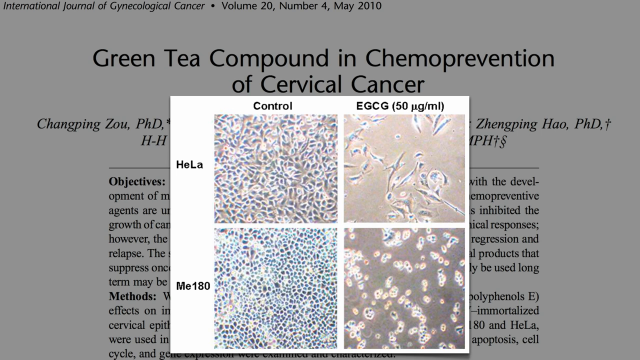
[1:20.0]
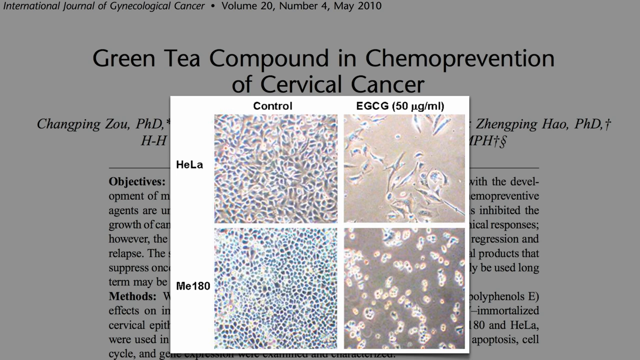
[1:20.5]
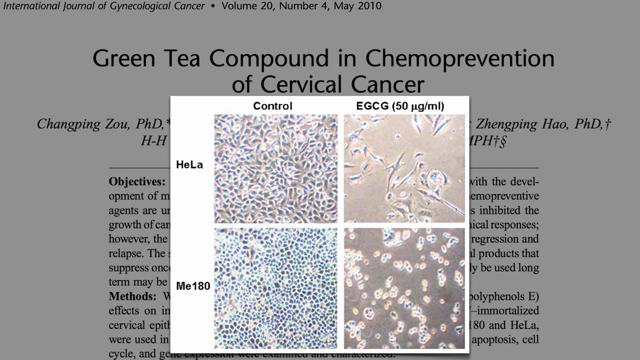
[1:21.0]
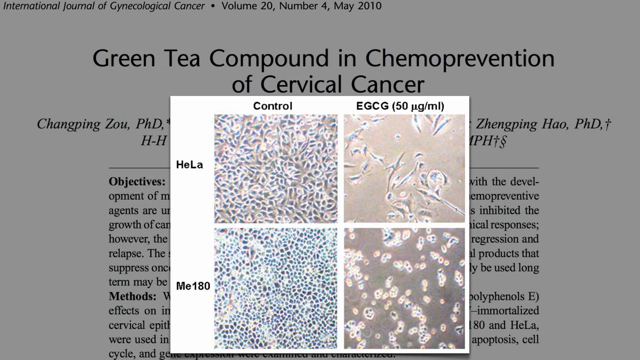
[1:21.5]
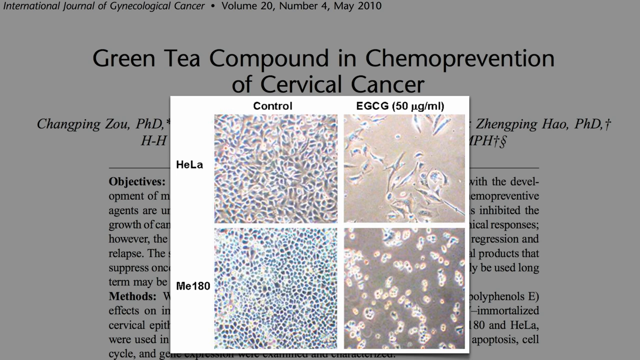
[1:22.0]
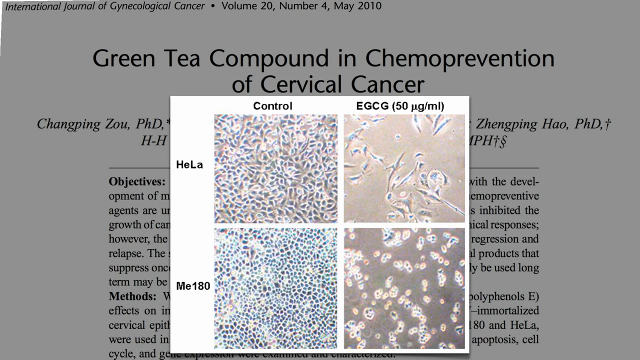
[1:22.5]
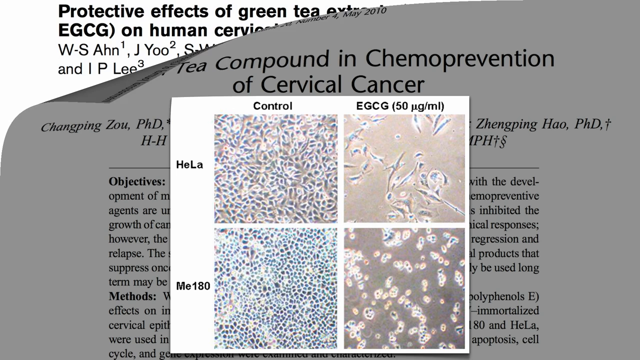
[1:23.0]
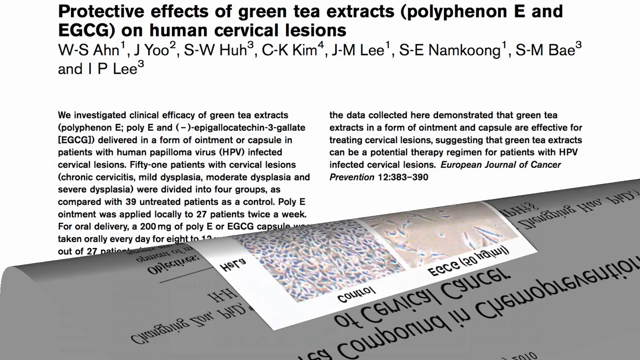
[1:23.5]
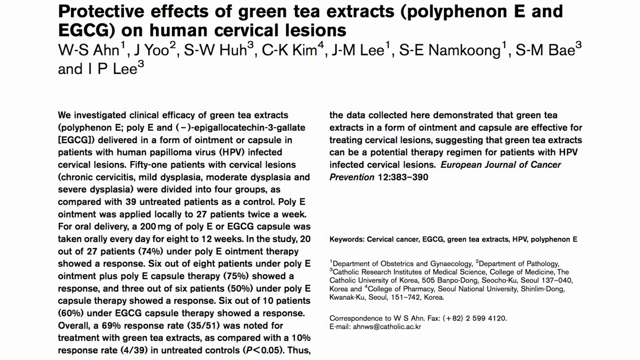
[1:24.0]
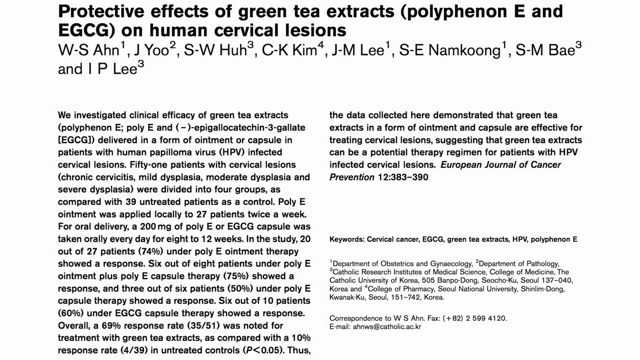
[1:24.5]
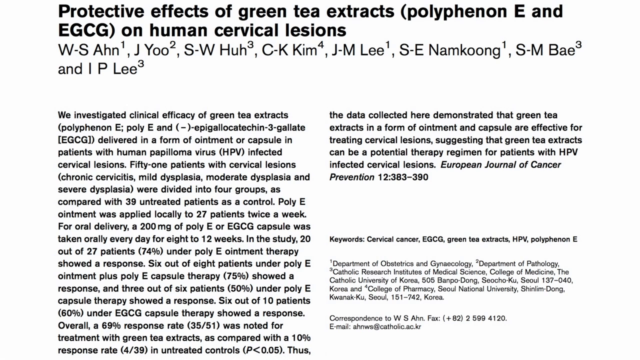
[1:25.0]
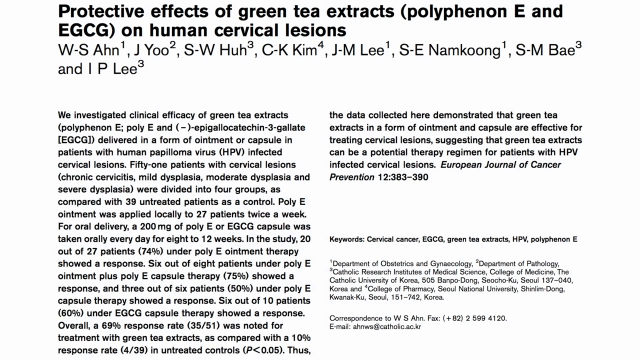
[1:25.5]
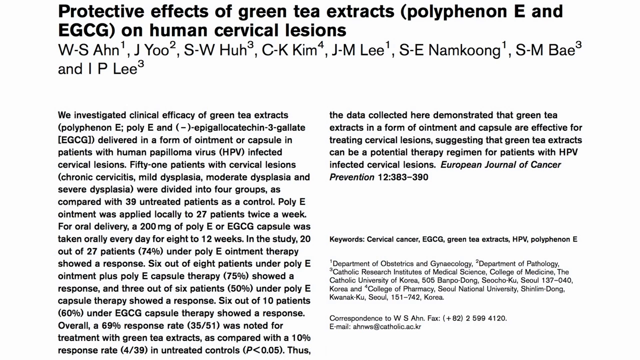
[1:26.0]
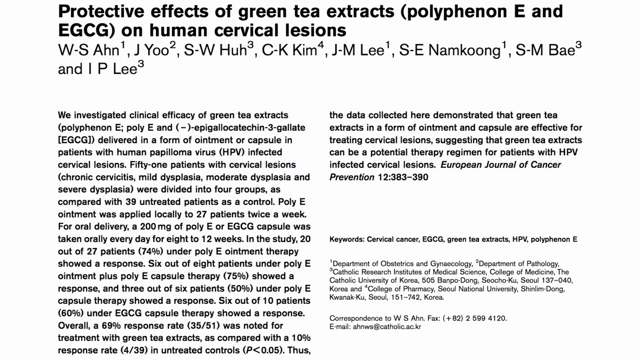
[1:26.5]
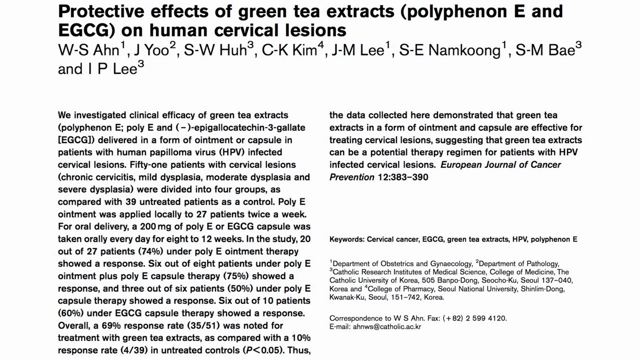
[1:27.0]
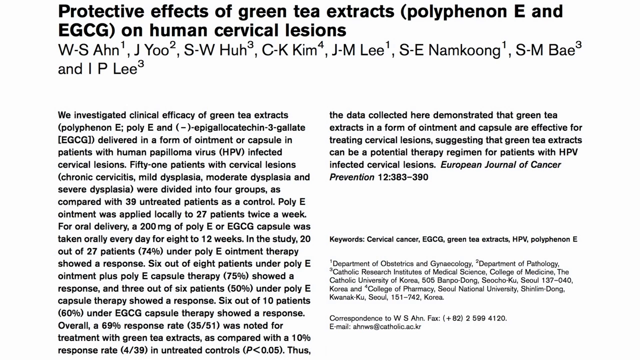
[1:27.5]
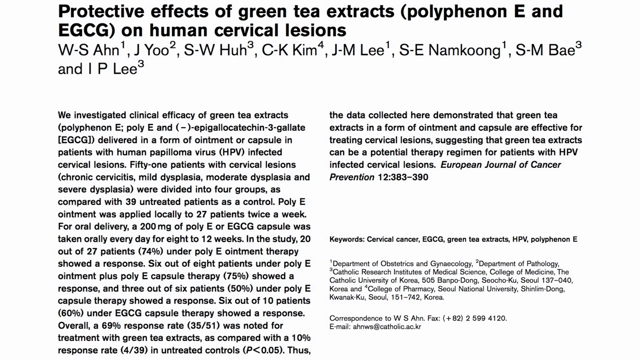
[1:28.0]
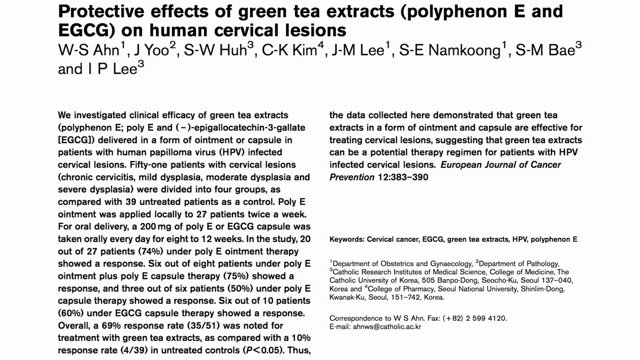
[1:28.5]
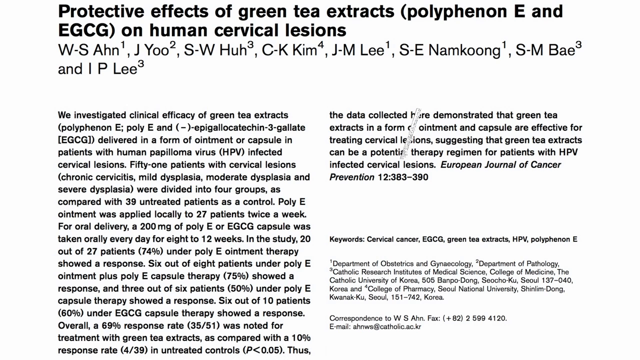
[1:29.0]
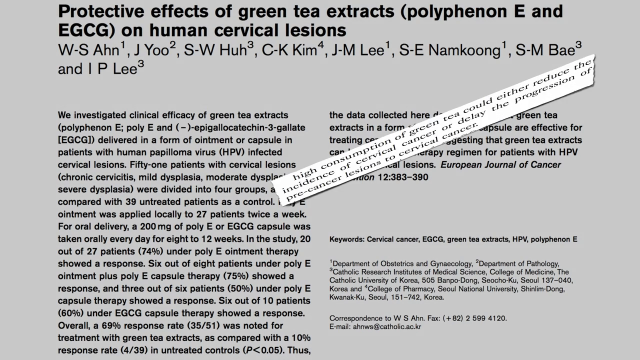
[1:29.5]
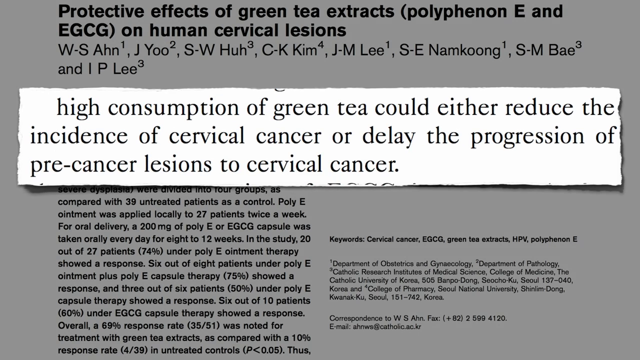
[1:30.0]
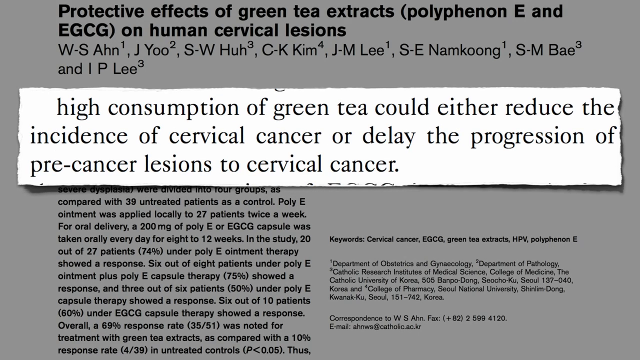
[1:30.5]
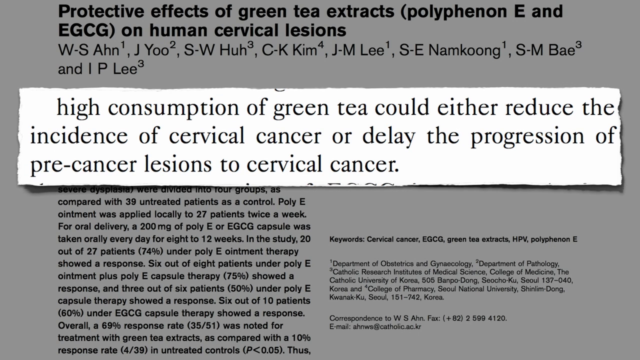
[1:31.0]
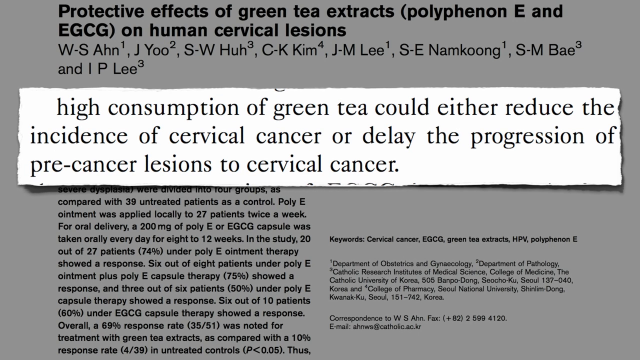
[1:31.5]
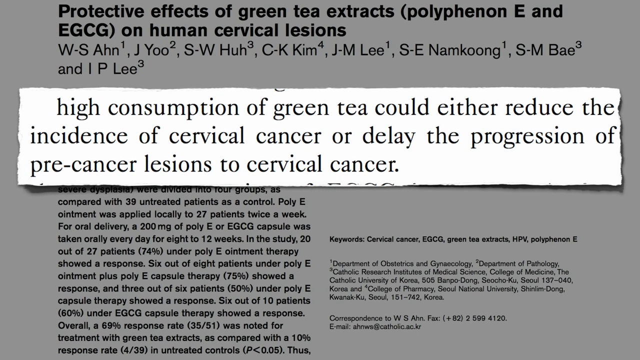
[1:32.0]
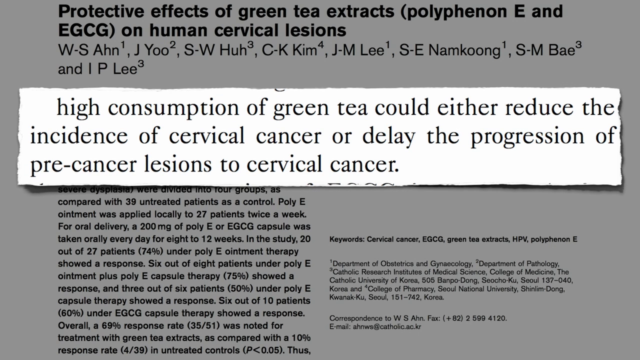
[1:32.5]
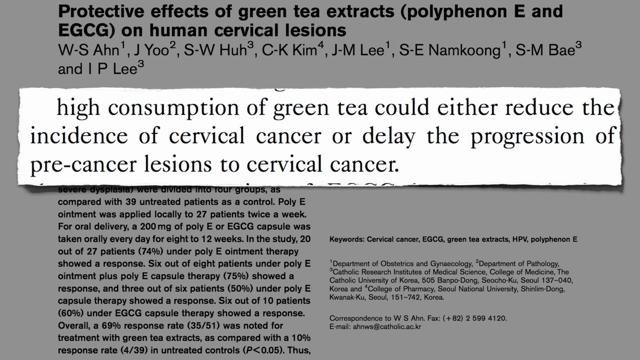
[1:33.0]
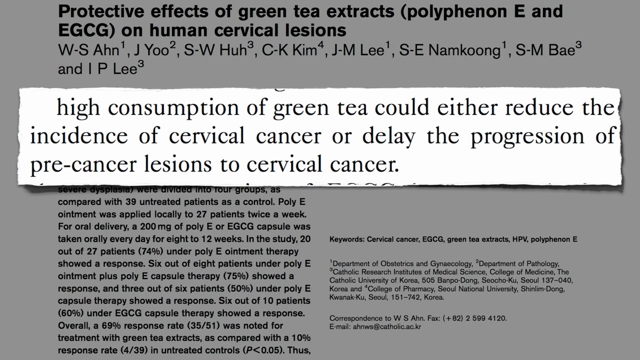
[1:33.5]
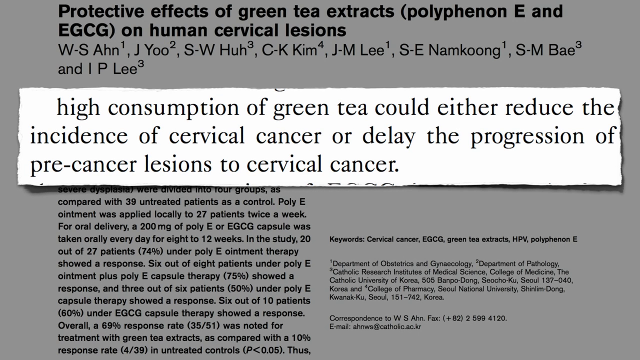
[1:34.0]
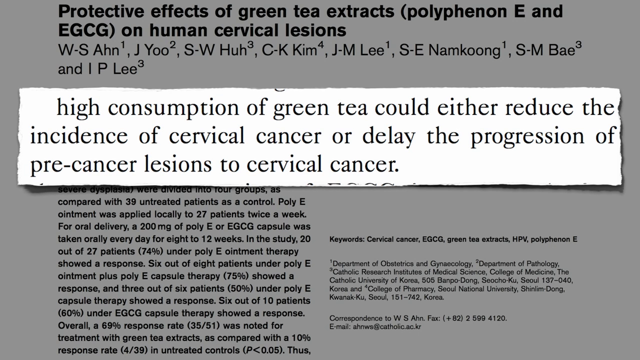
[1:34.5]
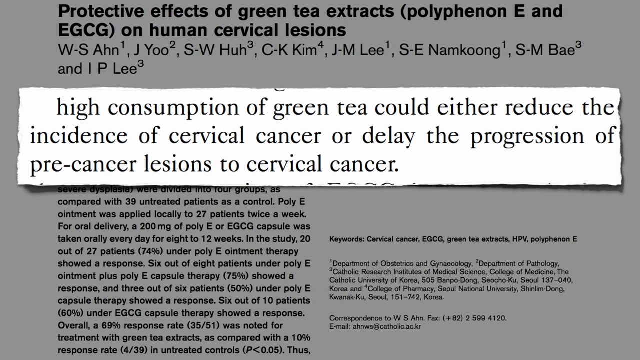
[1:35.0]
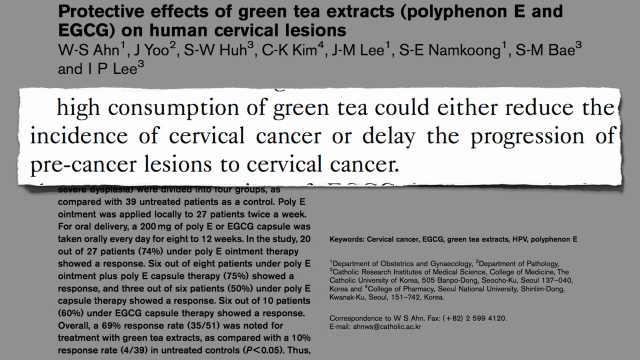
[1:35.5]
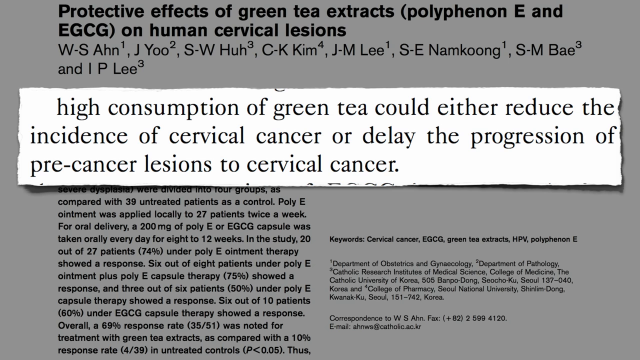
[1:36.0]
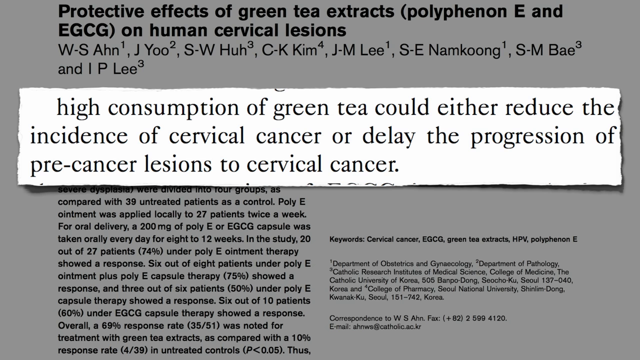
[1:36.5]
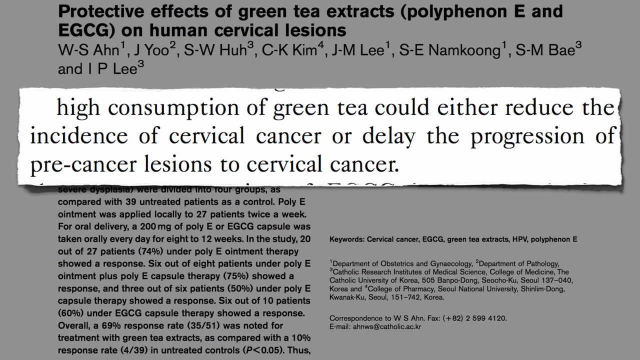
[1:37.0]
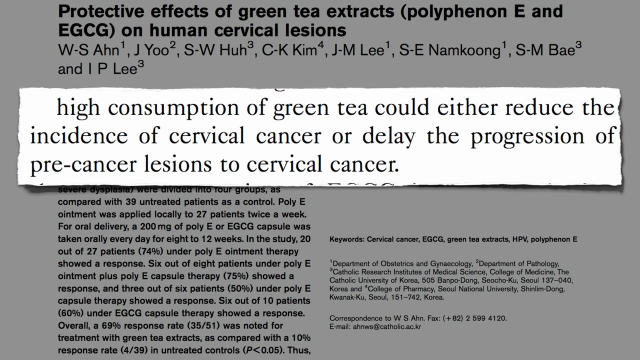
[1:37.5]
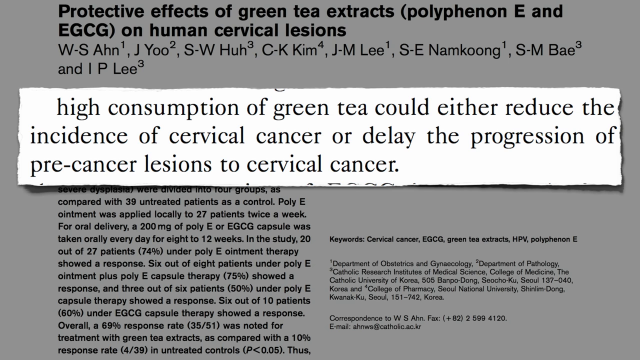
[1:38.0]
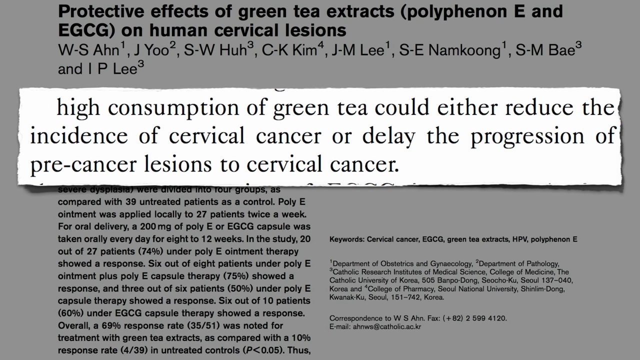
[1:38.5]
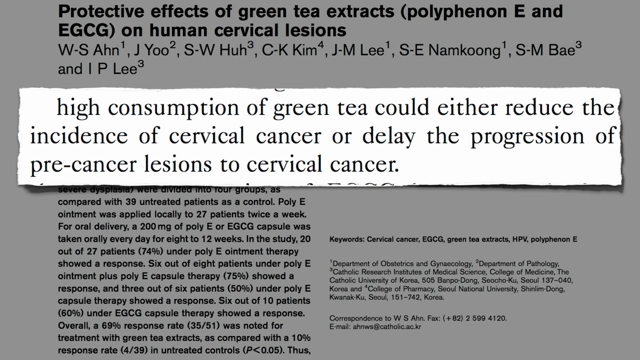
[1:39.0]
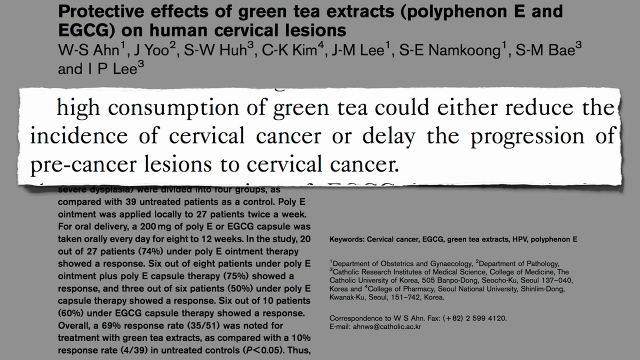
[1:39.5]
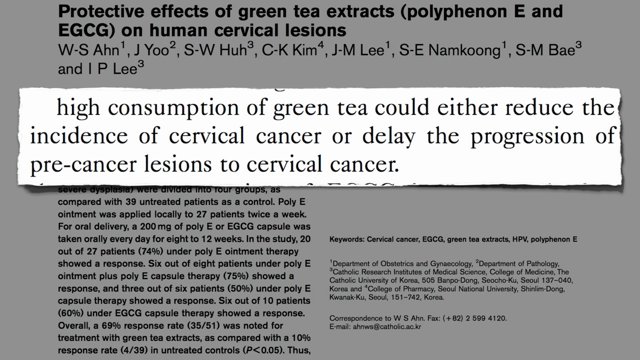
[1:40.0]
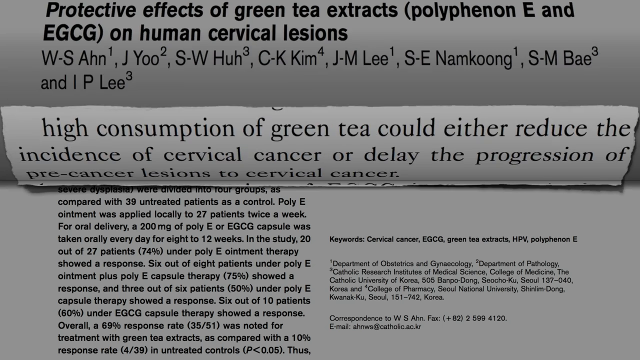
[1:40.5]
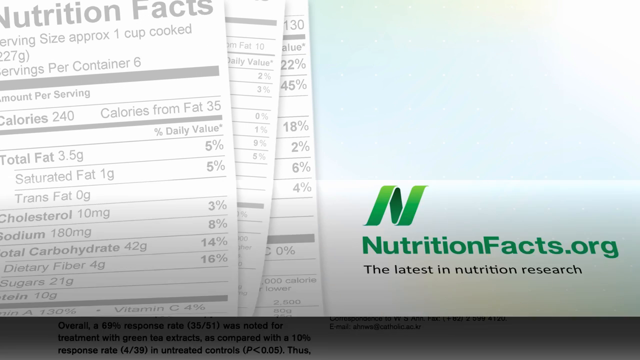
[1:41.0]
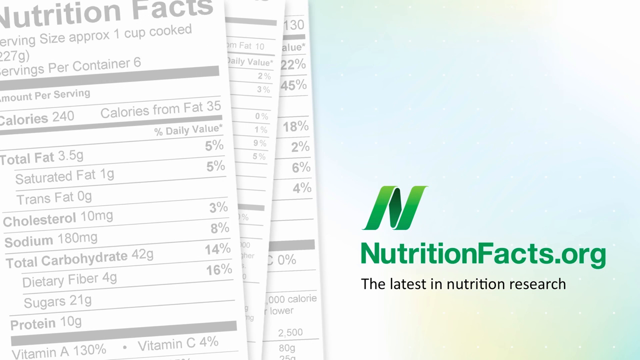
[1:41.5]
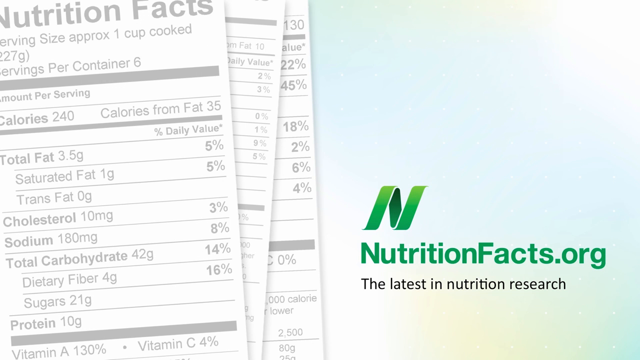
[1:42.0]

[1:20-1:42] The 2x2 images remain on screen for a few more seconds before the article peels away from the top left corner. The newly revealed article is titled "Protective Effects of Green Tea Extracts (Polyphenon E and EGCG) on Human Cervical Lesions." It shows the authors, the foreword, some keywords, the associated institutions, and an email address. A quote is revealed that reads, "High consumption of green tea could either reduce the incidence of cervical cancer or delay the progression of pre-cancer lesions to cervical cancer." After a few seconds, a transition that looks like shutters, with three horizontal lines moving from top to bottom, leads to the final screen: the nutritionfacts.org ending screen, which has random nutritional facts, the Nutrition Facts logo and website, and a subtitle reading "The latest in nutrition research."